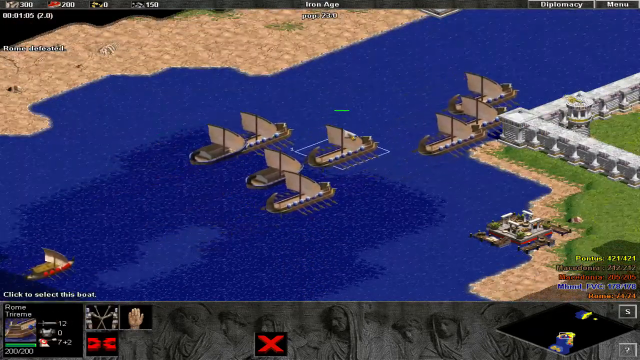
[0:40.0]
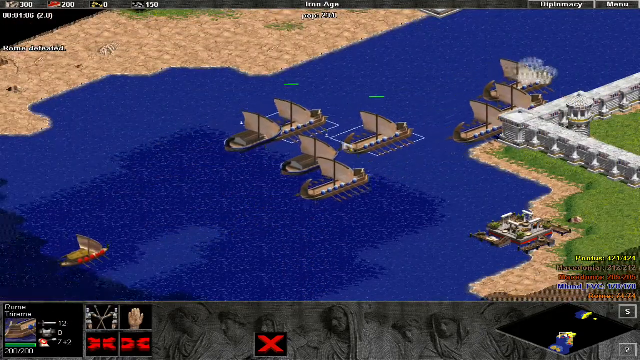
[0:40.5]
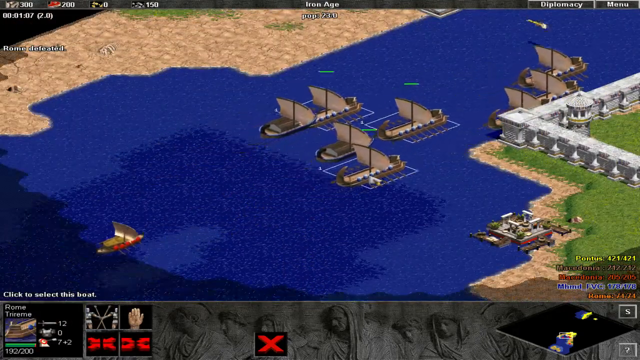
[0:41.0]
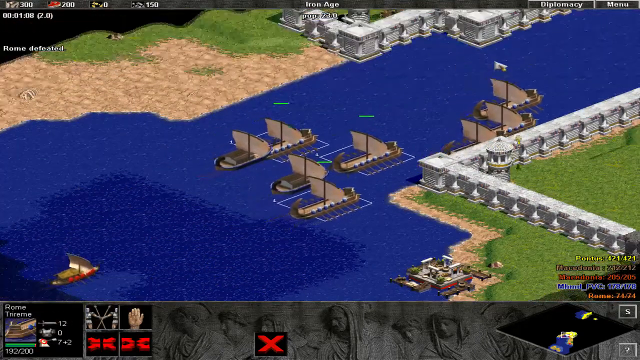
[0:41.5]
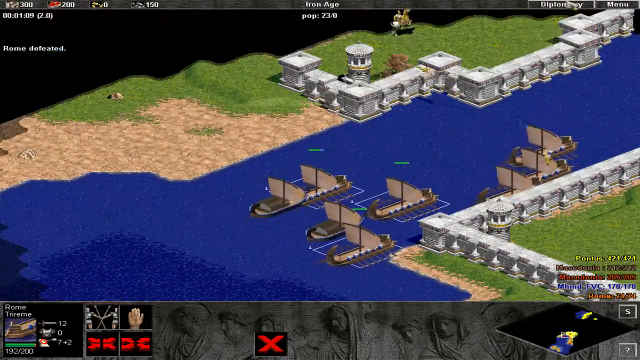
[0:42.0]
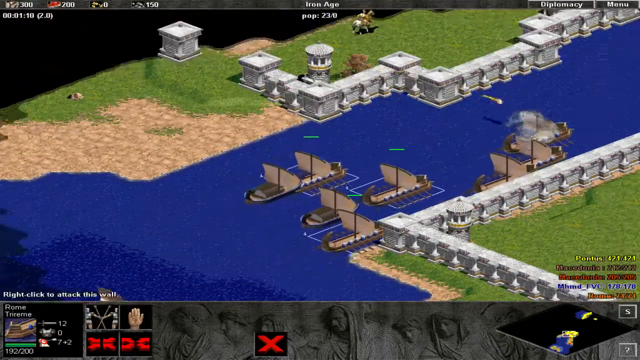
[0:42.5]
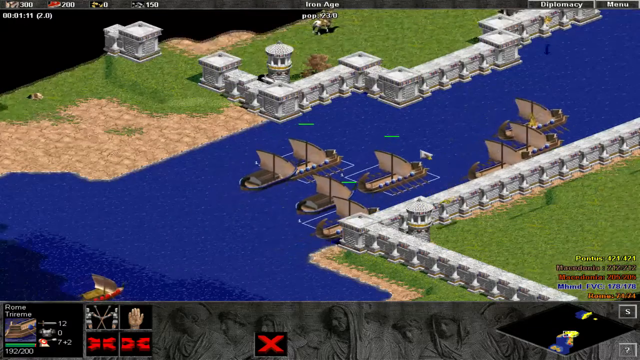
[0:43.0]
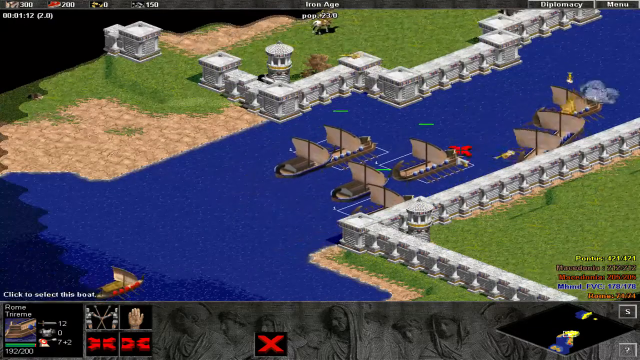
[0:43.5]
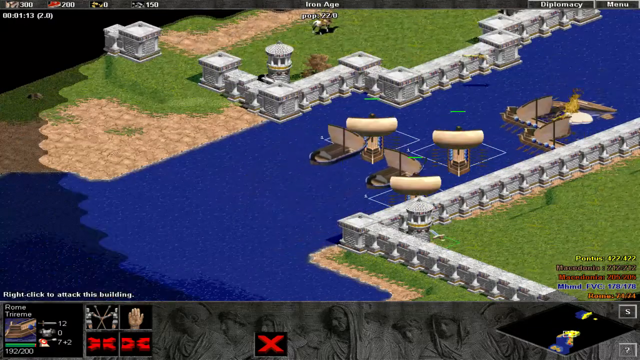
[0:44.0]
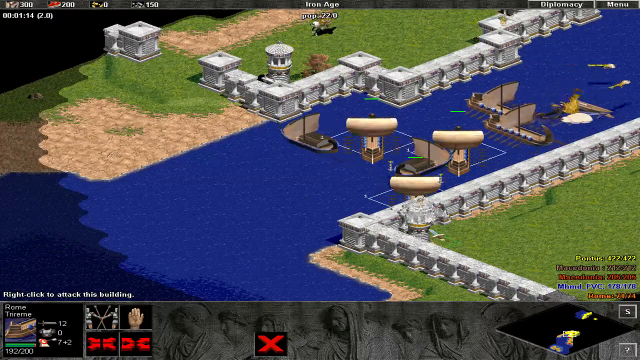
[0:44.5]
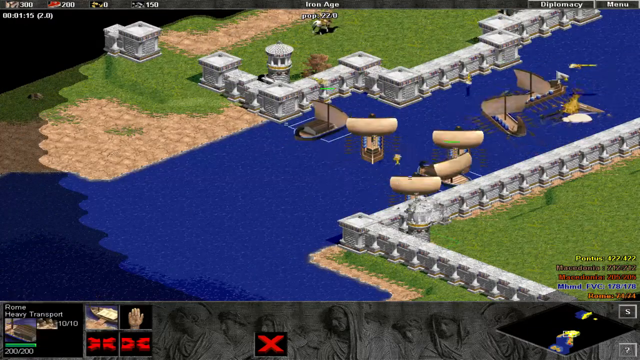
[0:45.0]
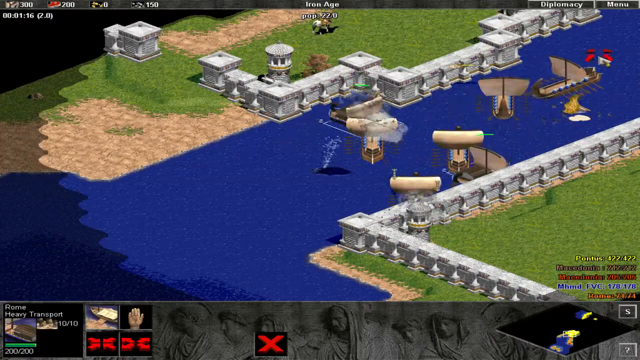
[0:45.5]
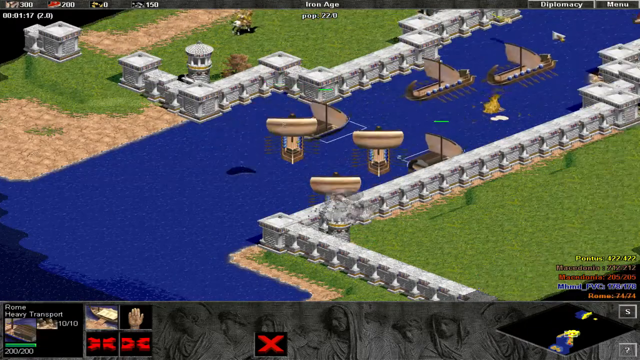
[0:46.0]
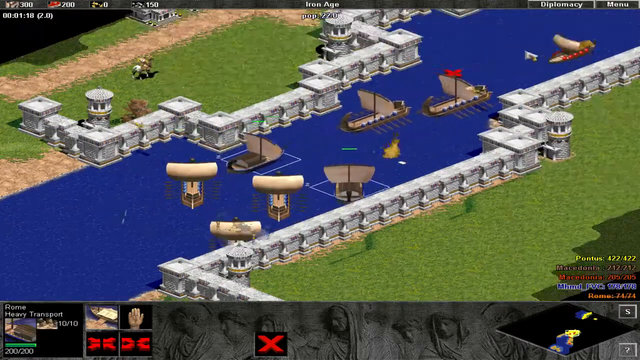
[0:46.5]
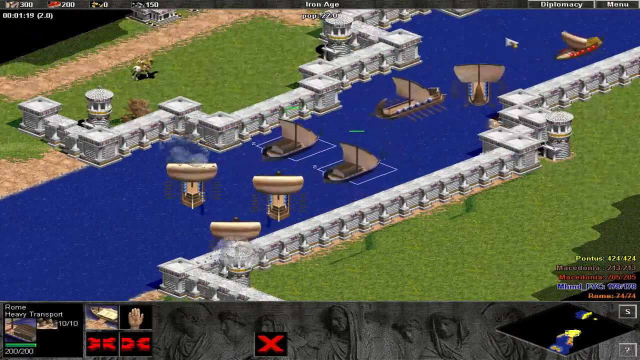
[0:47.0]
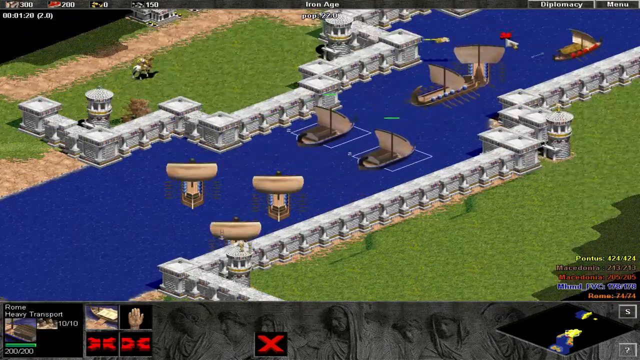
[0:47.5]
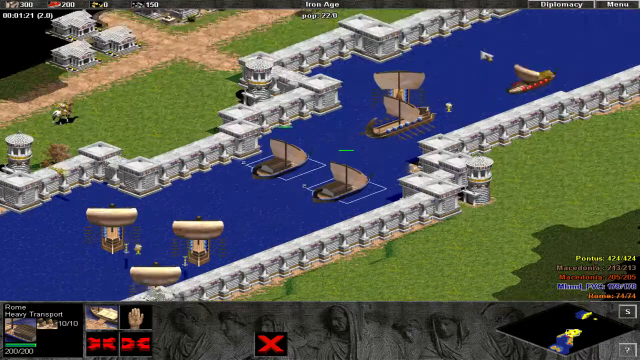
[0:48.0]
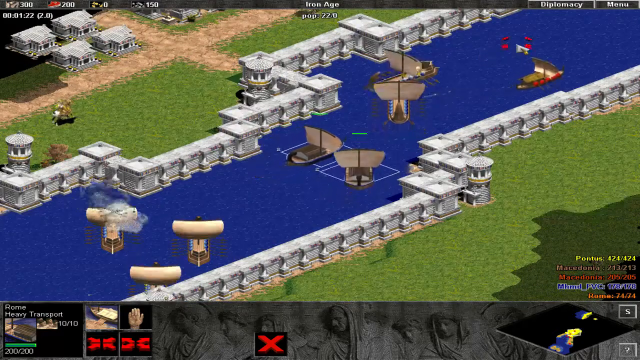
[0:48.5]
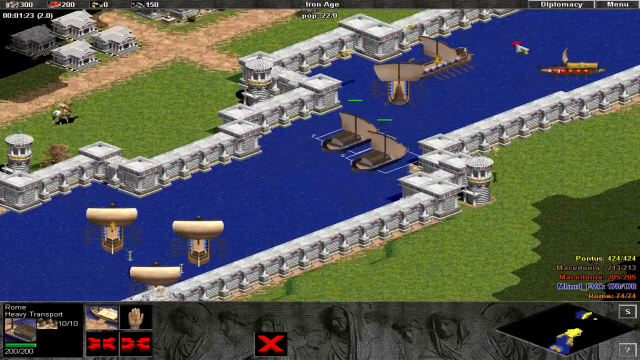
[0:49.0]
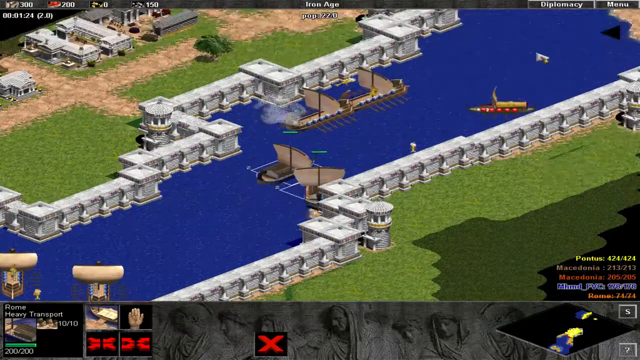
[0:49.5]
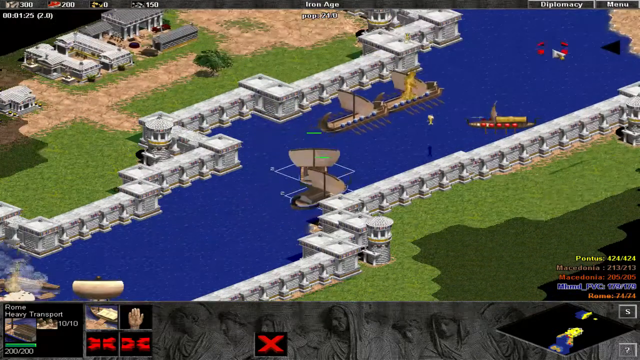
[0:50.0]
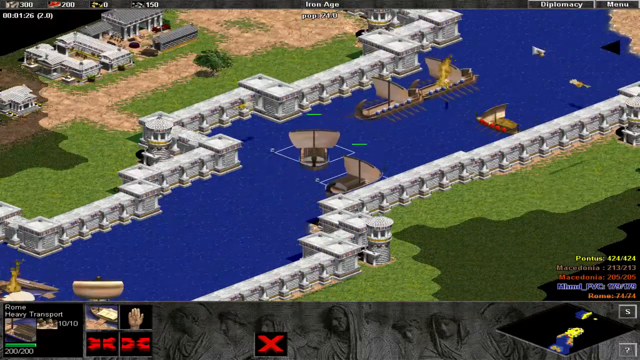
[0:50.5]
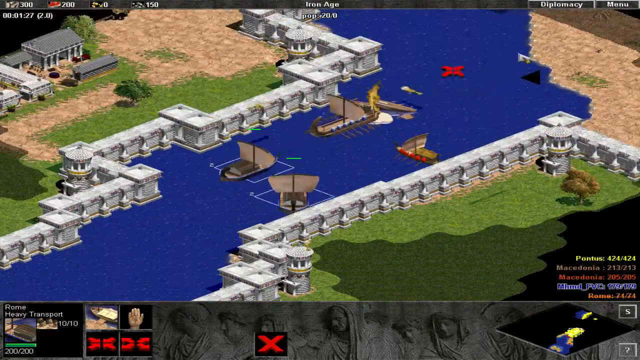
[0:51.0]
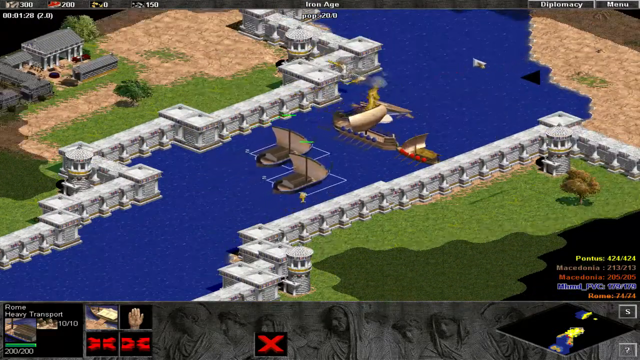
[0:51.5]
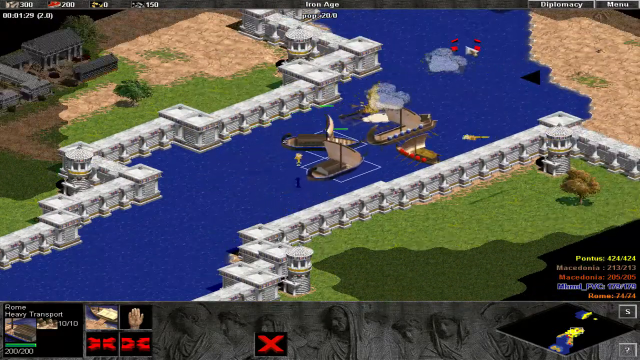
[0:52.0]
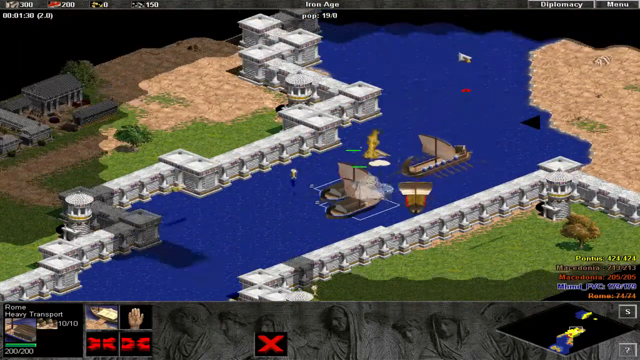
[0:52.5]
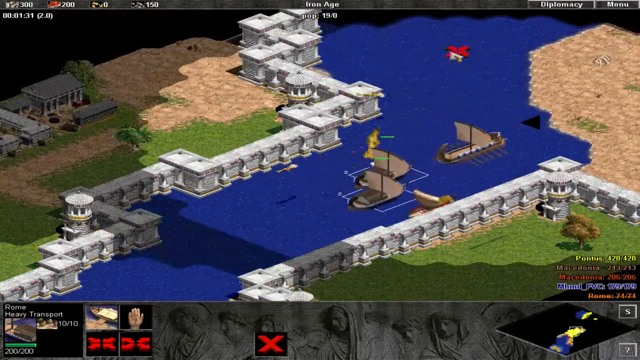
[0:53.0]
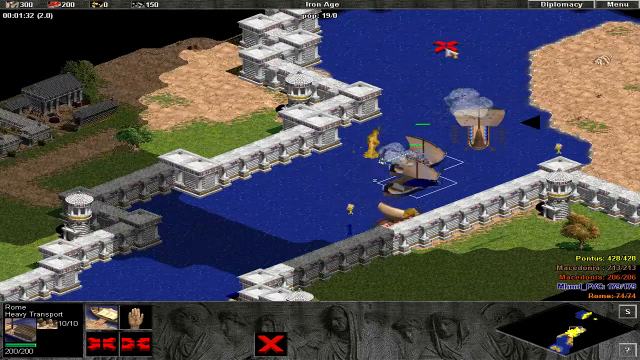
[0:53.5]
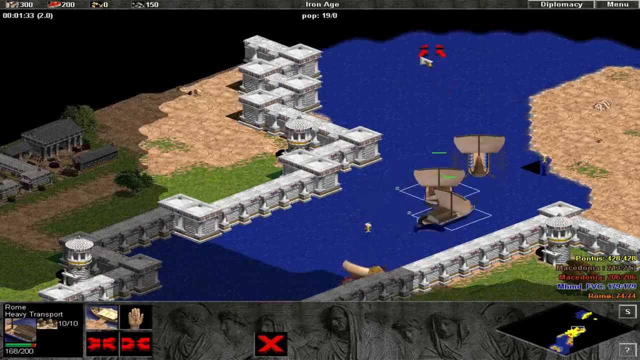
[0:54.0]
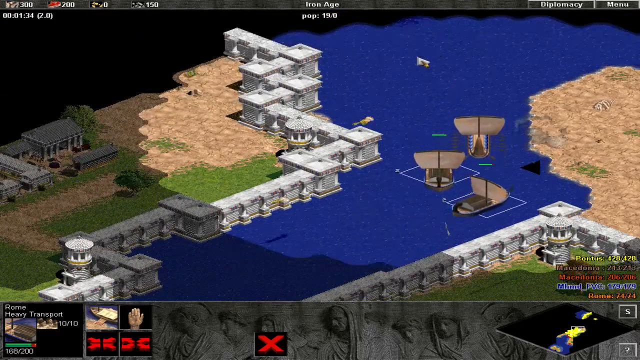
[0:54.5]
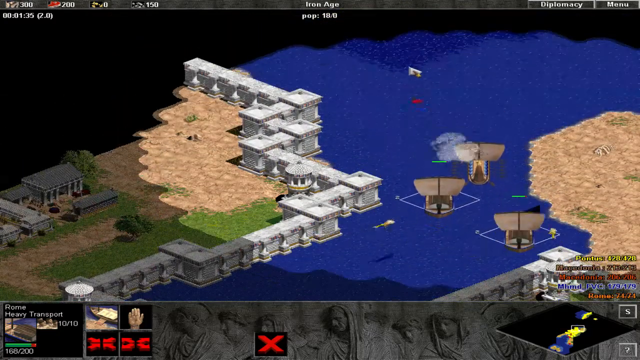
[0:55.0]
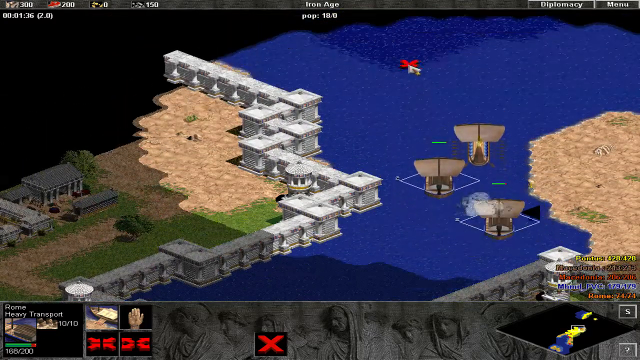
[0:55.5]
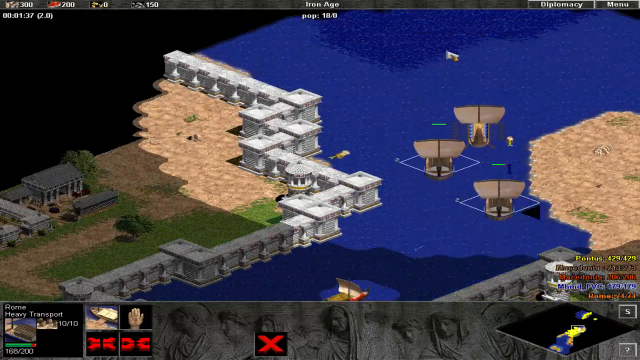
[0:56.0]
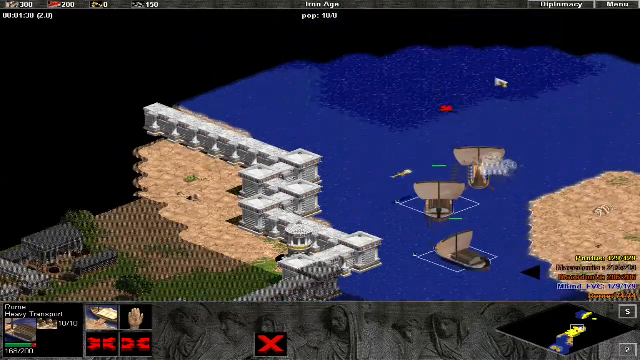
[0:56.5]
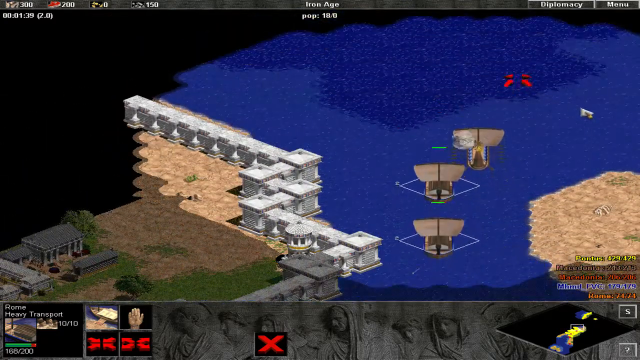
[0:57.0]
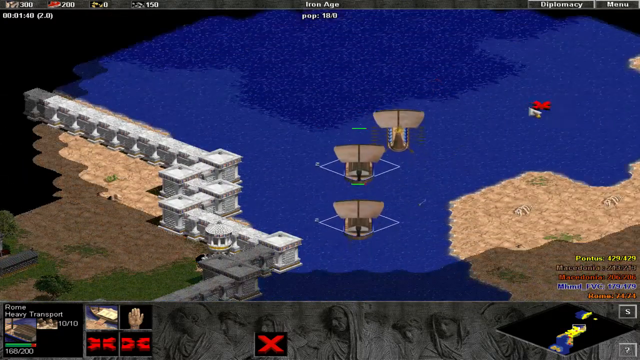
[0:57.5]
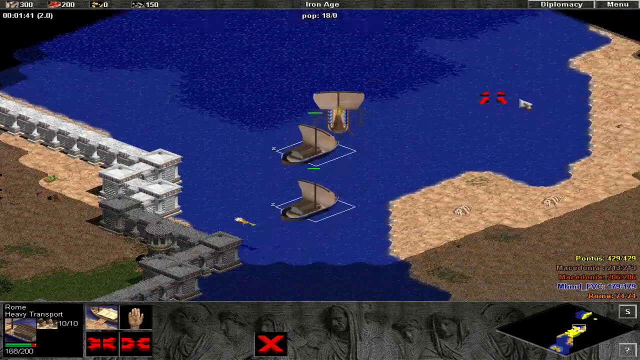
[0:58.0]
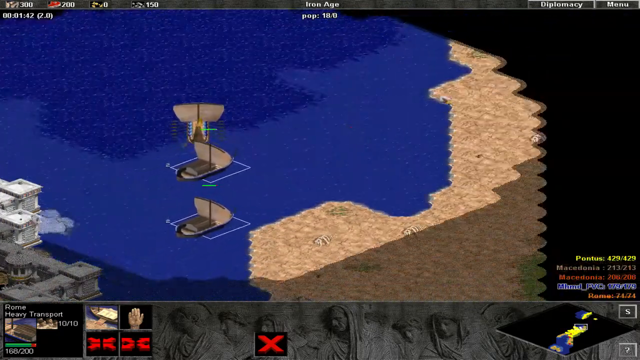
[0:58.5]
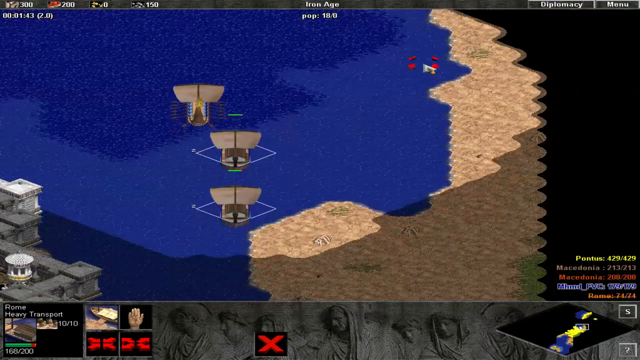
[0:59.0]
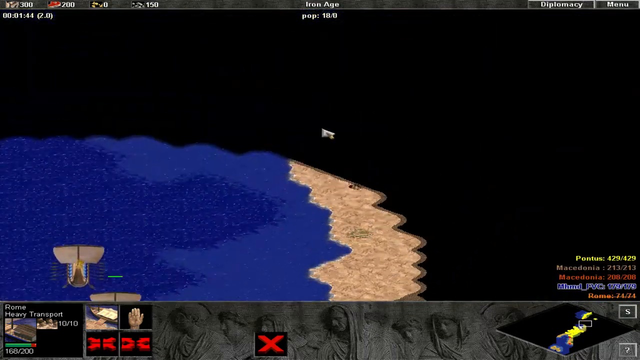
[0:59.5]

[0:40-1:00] A fleet of what looks like eight ships heads northeast to the outside of the city with the white marble-looking wall fortifications, and another, smaller ship is in the southwest corner. As the ships come in, they pass through what looks like a canal fortified on both sides. The ships are hit with arrows and other missiles fired from the fortifications, and they fire back at the fortifications. The ships head northwest, then back north, sailing past. Afterwards there appear to be only three ships left, so it looks like five of the ships sank in the battle.